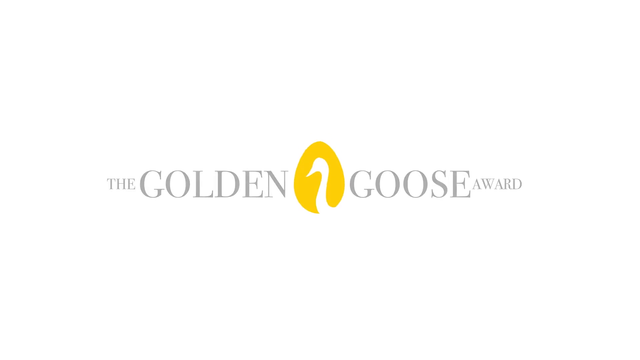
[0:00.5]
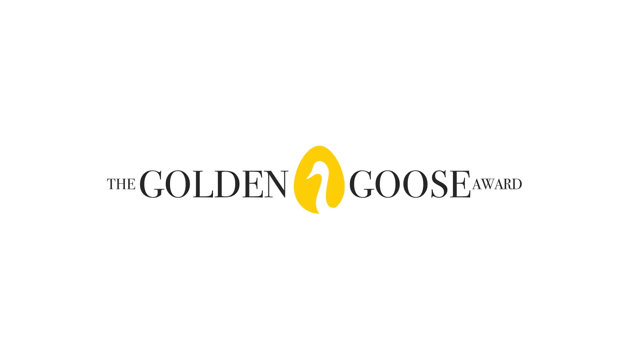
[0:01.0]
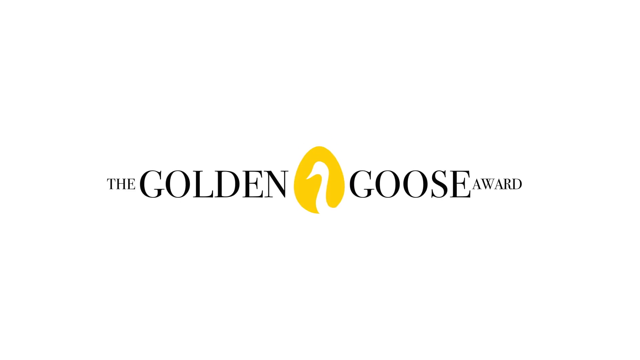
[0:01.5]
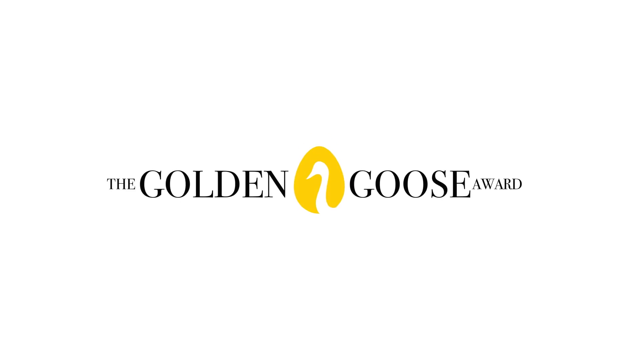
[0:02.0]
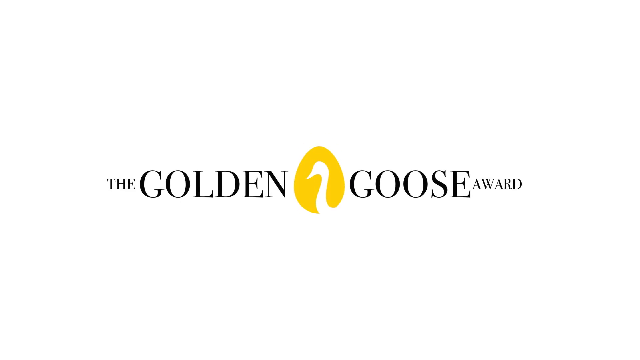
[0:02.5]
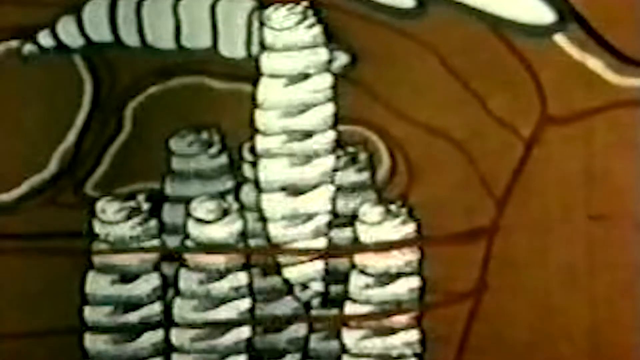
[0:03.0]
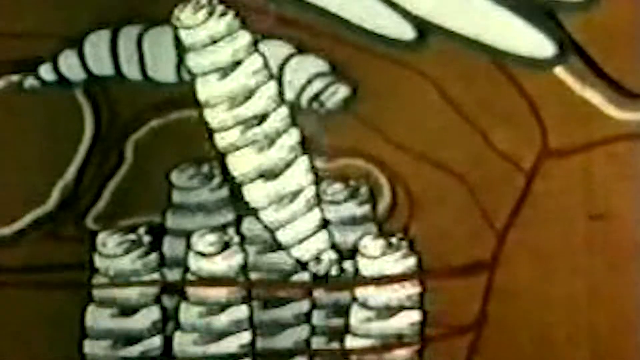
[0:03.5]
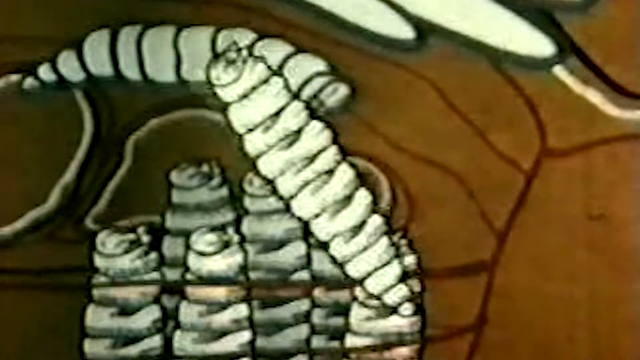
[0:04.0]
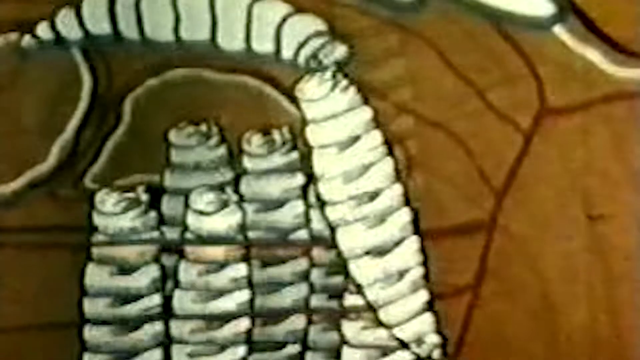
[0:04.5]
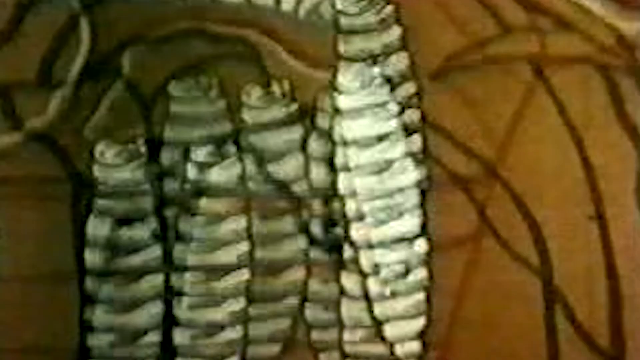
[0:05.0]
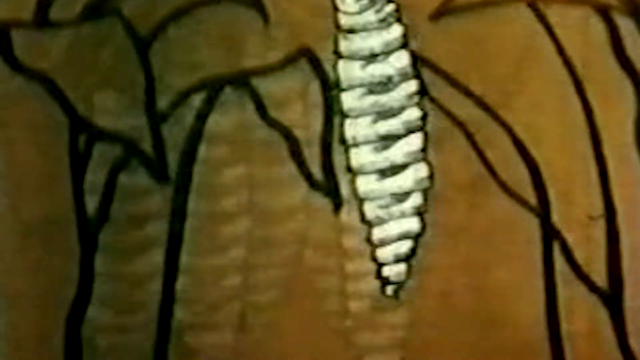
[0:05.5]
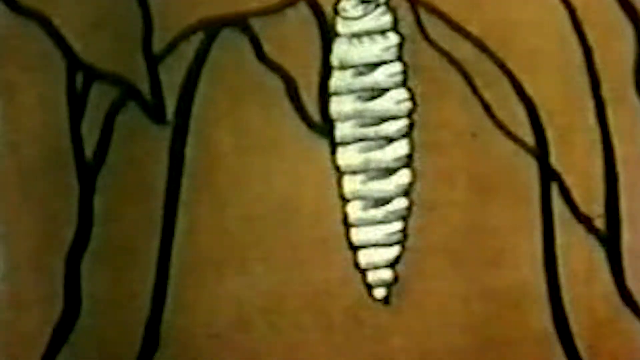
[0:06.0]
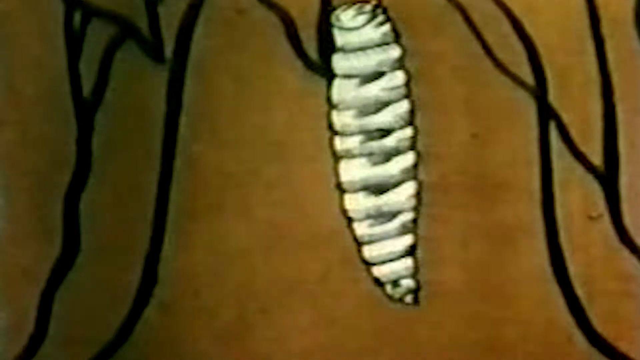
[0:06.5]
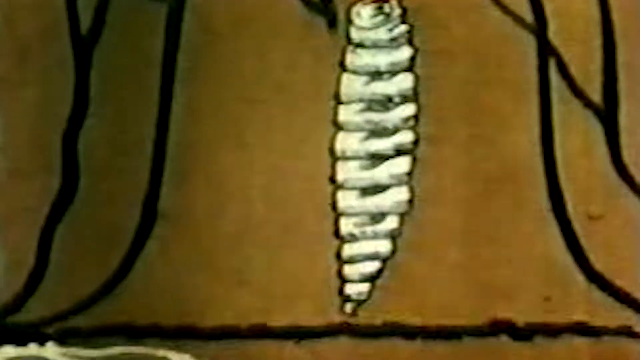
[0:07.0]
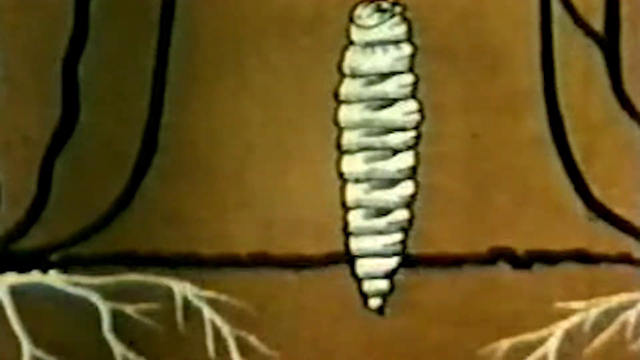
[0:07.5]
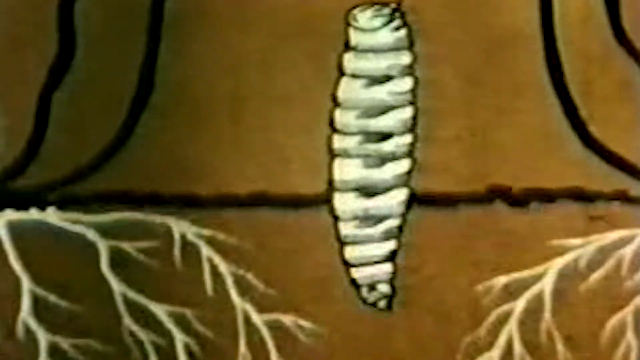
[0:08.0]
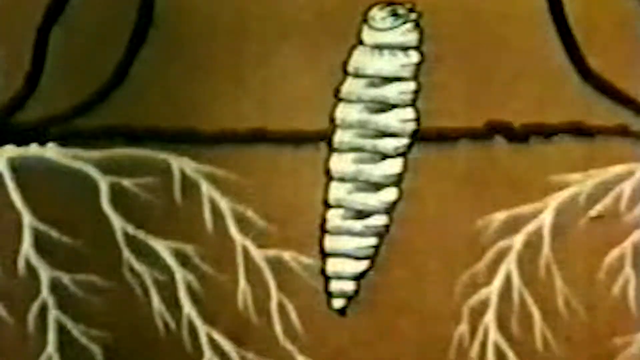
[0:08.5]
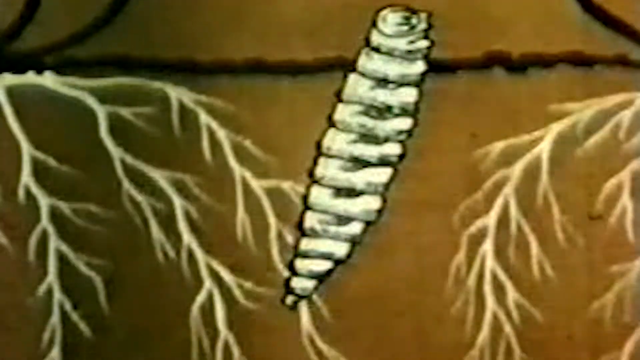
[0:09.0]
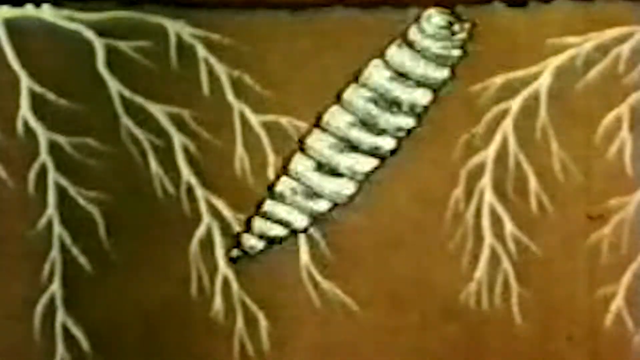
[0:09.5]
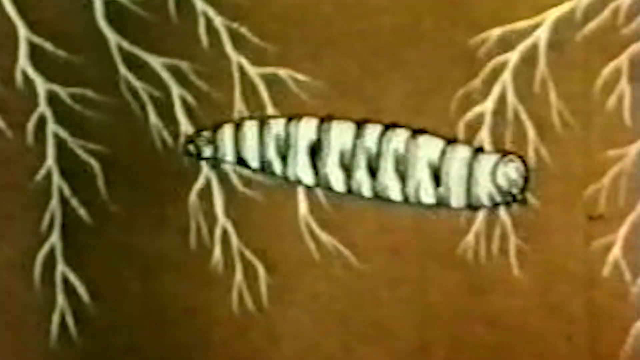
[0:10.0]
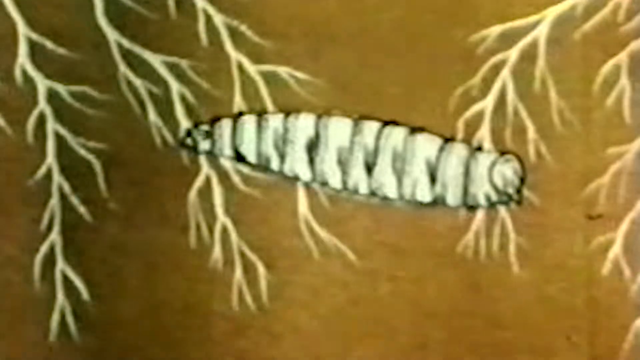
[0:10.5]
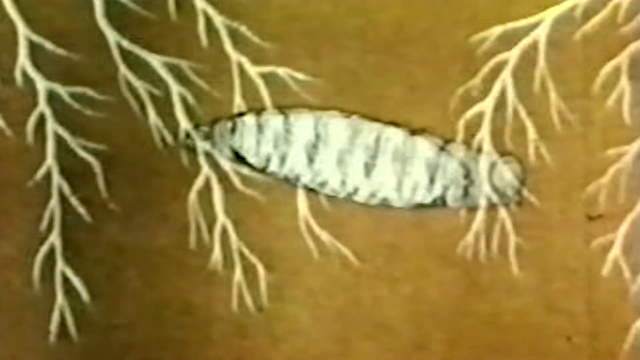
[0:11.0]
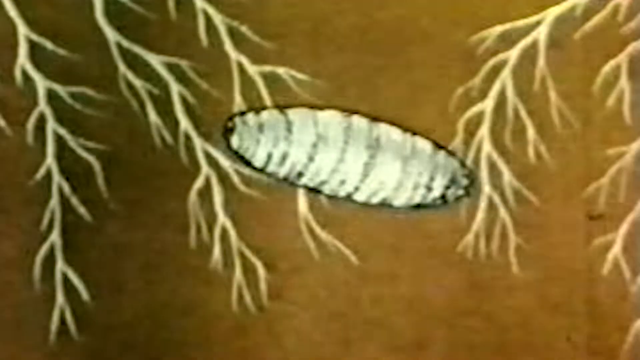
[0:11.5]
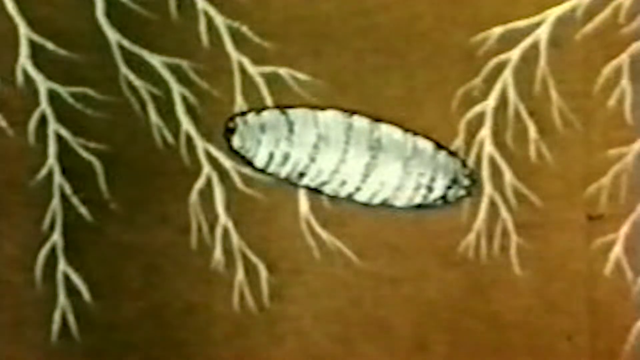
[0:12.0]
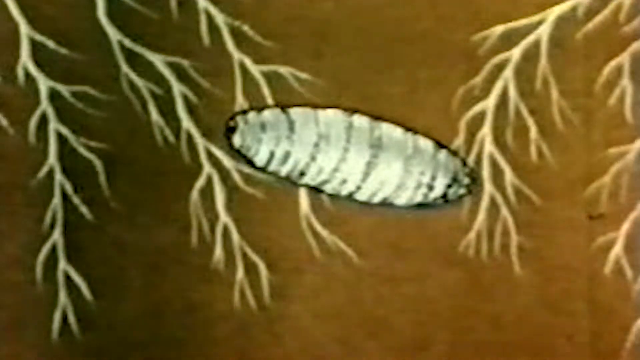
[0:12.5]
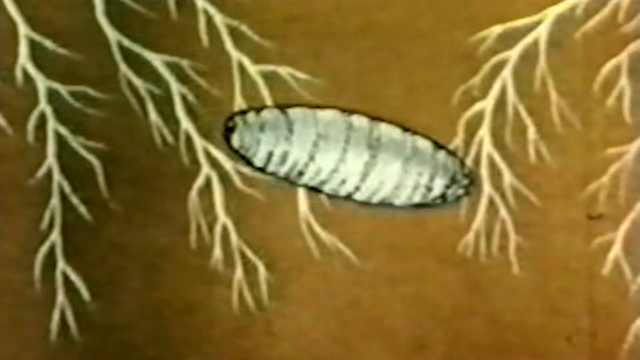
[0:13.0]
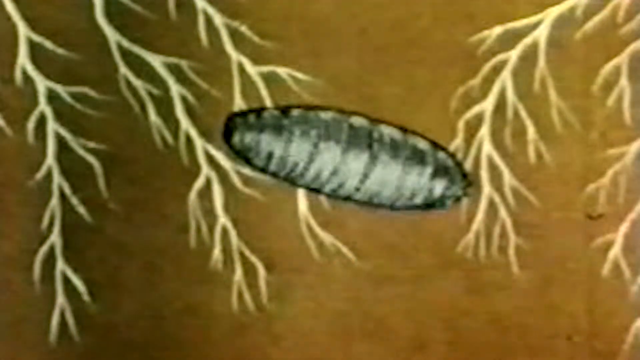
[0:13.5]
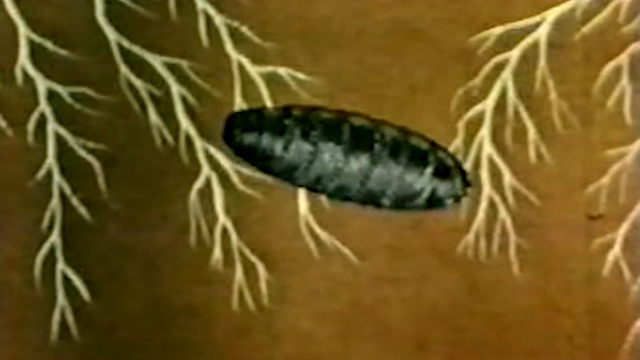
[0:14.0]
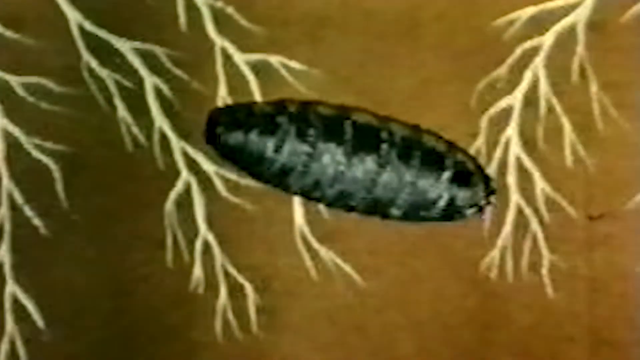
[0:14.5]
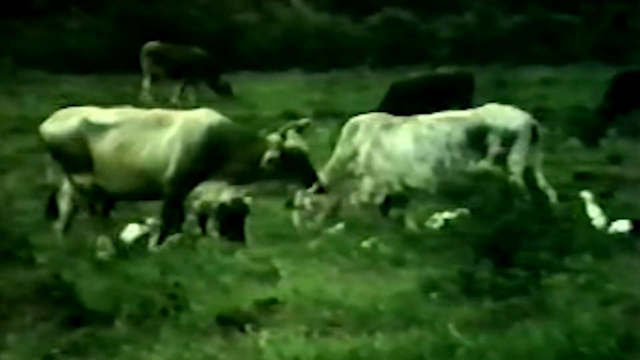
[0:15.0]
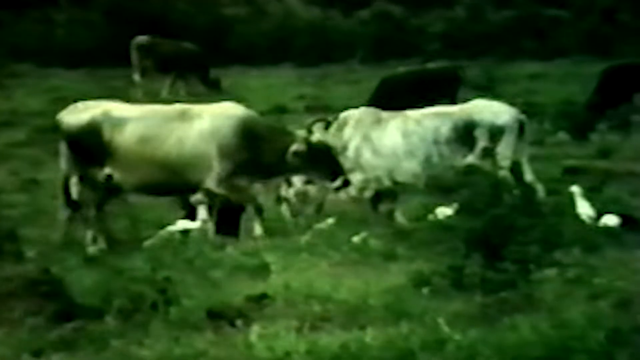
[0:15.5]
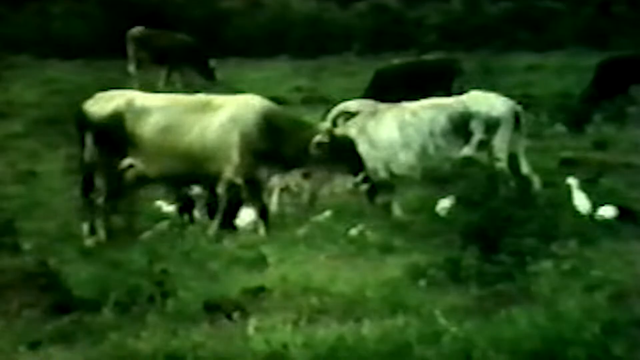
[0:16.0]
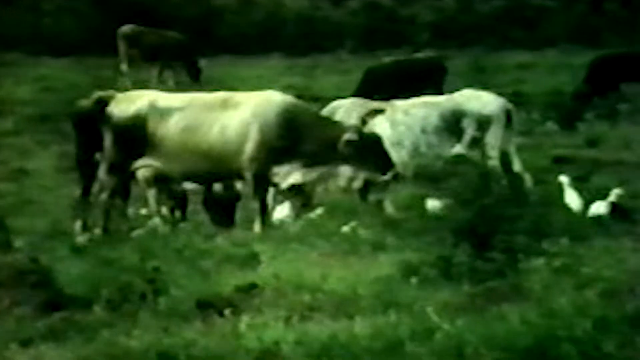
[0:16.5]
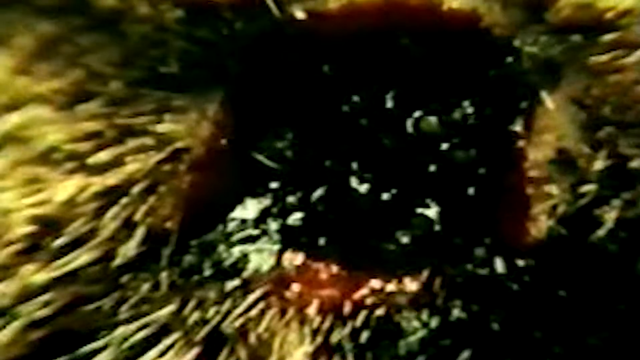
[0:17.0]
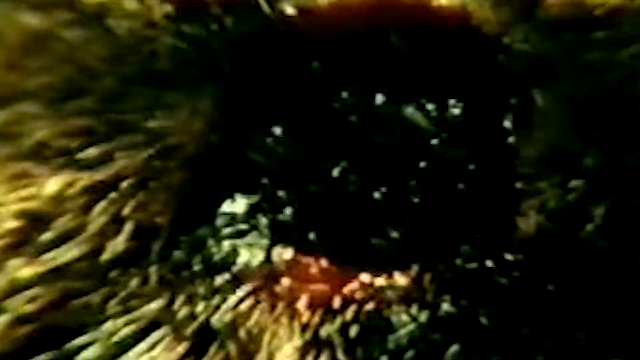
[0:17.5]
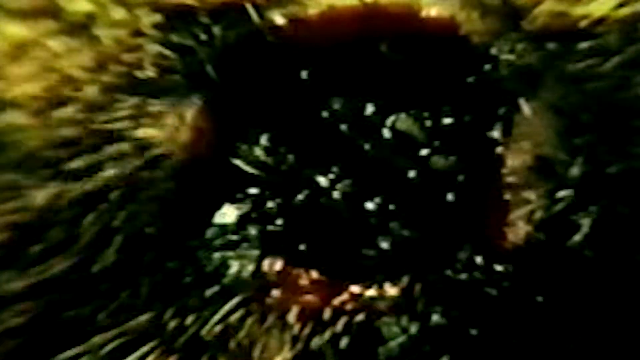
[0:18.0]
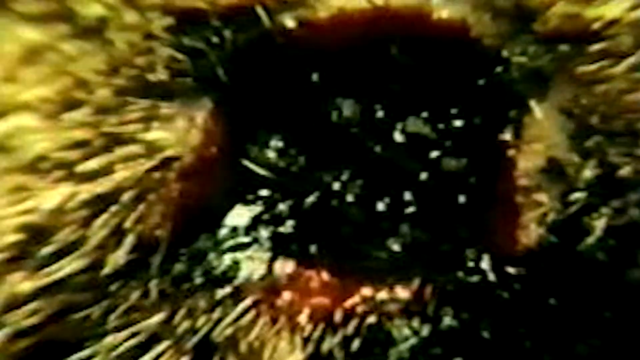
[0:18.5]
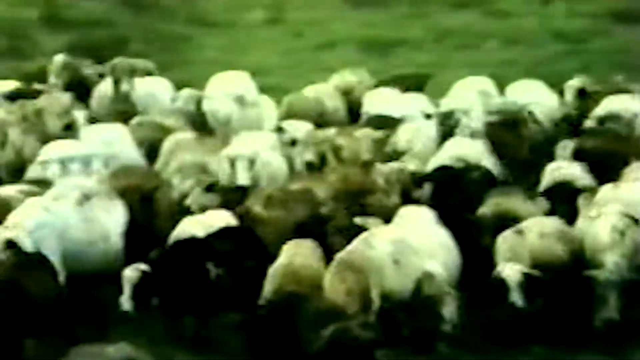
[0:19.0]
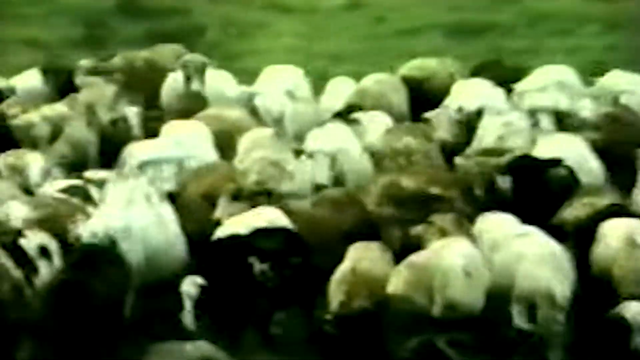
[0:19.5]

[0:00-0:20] A solid white background displays a logo across its center reading "The Golden Goose Award" in black font. In the center of the words Golden Goose is a yellow egg-shaped logo that appears to have a white silhouette of a goose head coming up in it. The video then moves to a cartoon-style sequence in which a worm, bug or some type of insect, in white, moves around the screen and toward the bottom. As it moves down, it is implied that the insect is moving into the ground, and it changes from white to gray to black. Next comes a shot of a farm with a whole bunch of animals in a pasture; they appear to be cows. The video then moves quickly to another image of these insects, a whole bunch of them in the ground.